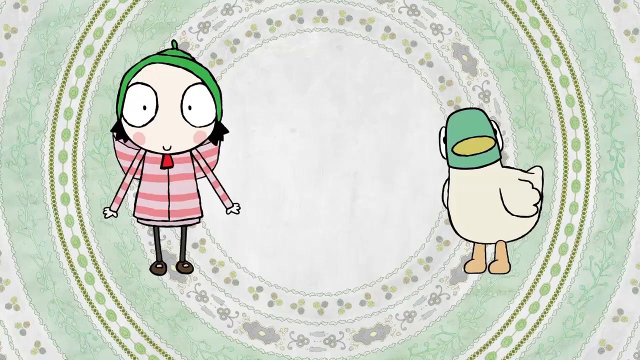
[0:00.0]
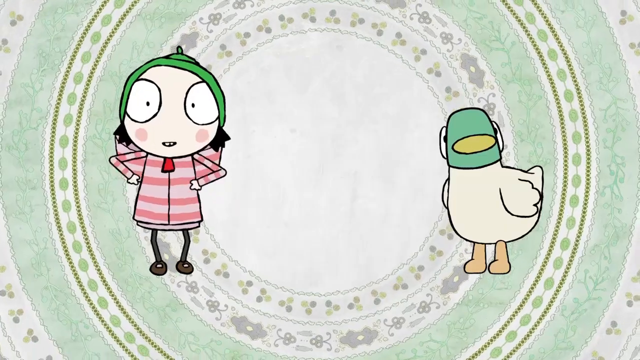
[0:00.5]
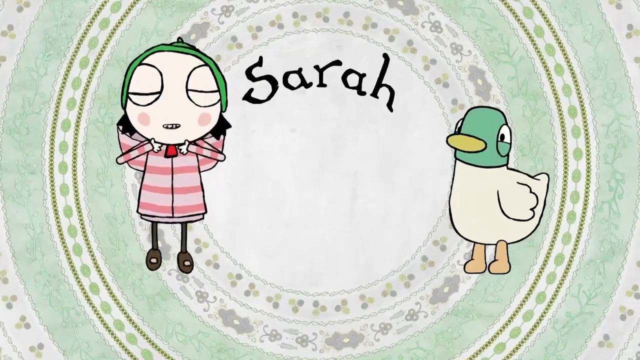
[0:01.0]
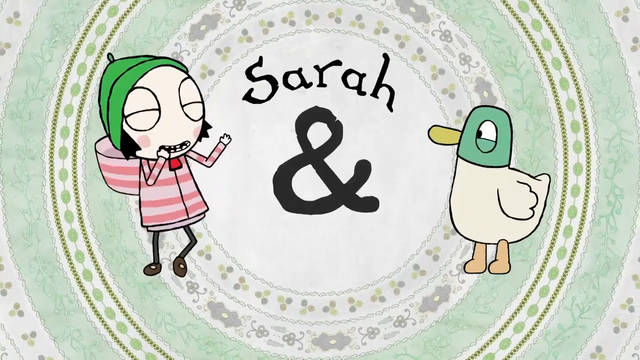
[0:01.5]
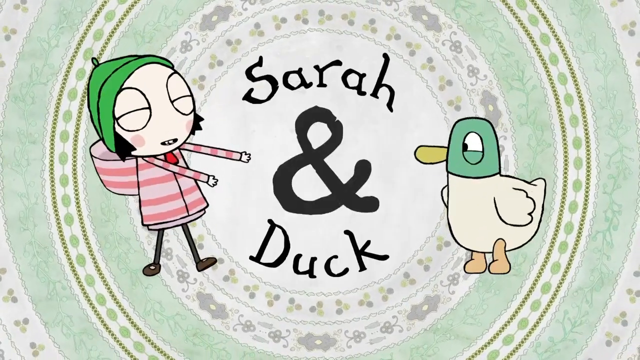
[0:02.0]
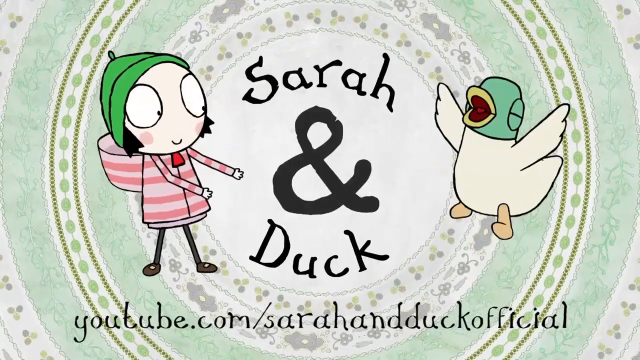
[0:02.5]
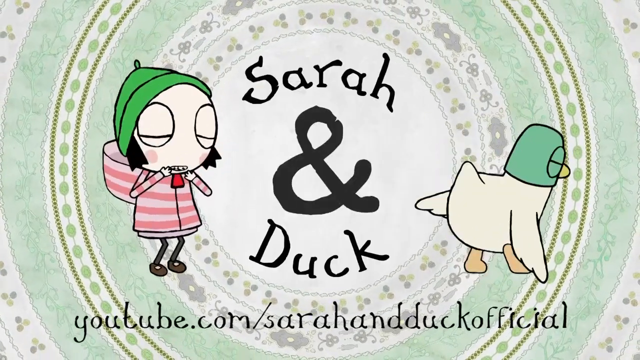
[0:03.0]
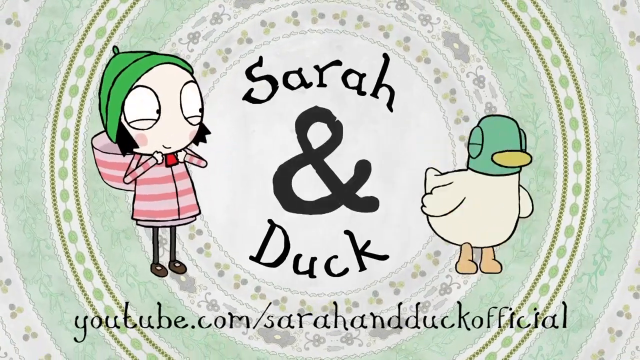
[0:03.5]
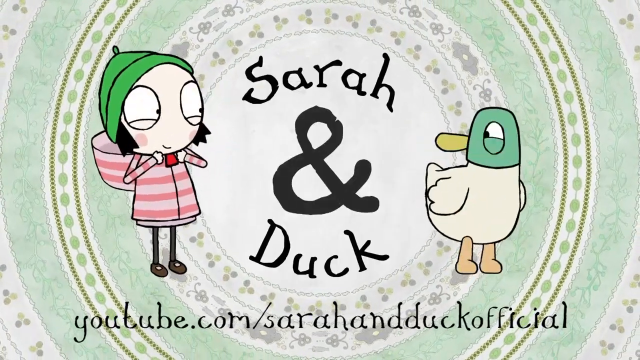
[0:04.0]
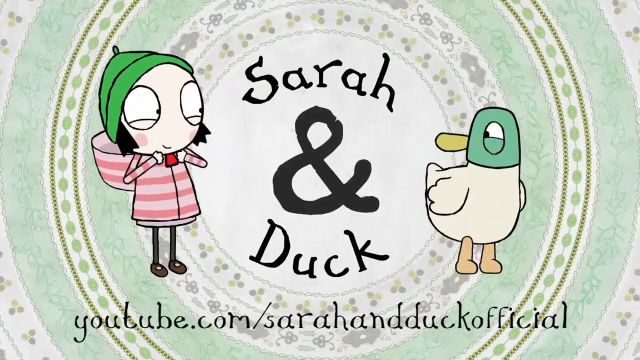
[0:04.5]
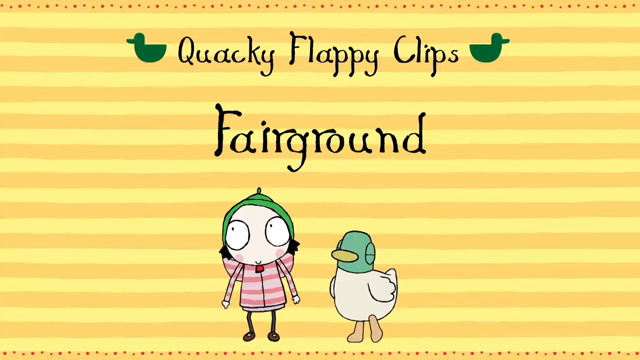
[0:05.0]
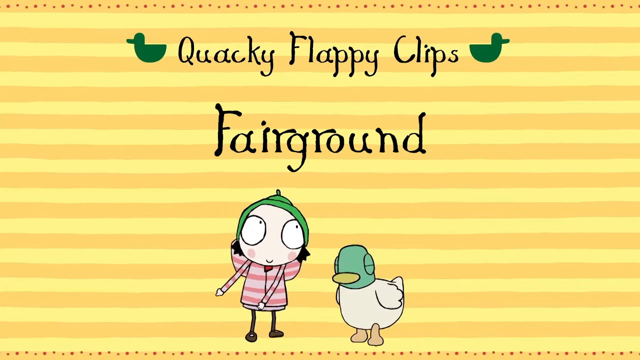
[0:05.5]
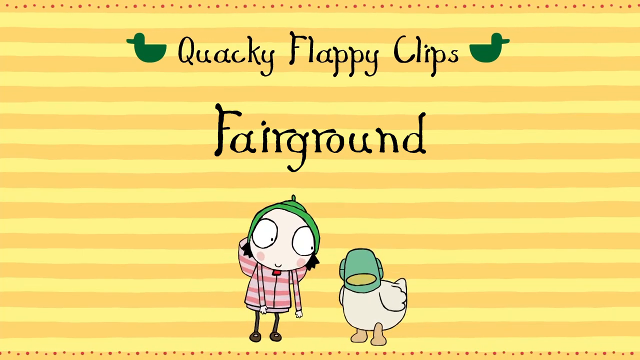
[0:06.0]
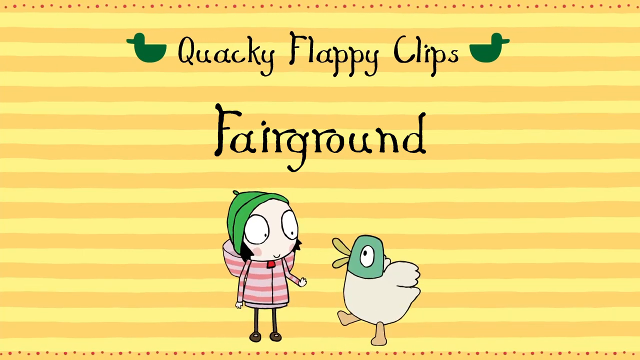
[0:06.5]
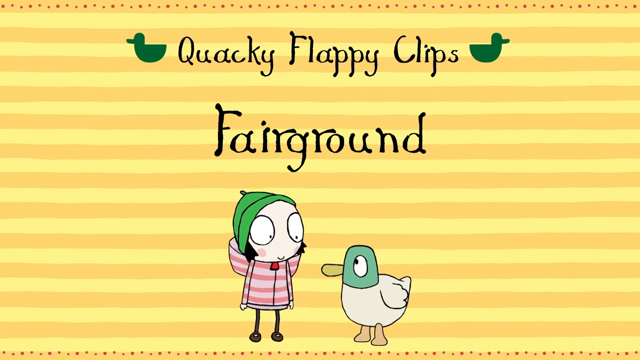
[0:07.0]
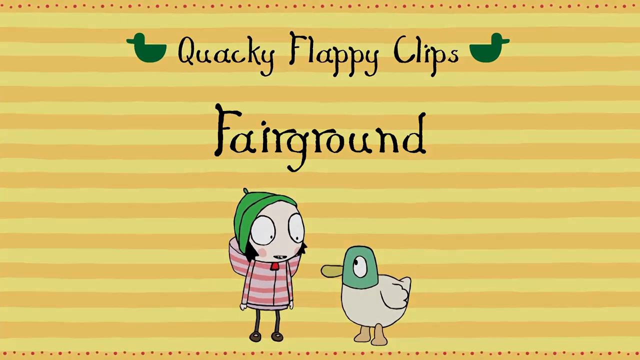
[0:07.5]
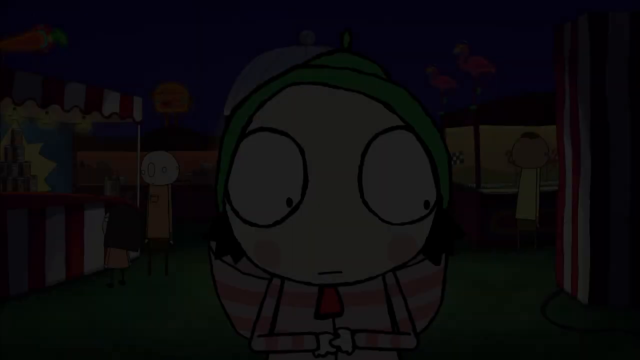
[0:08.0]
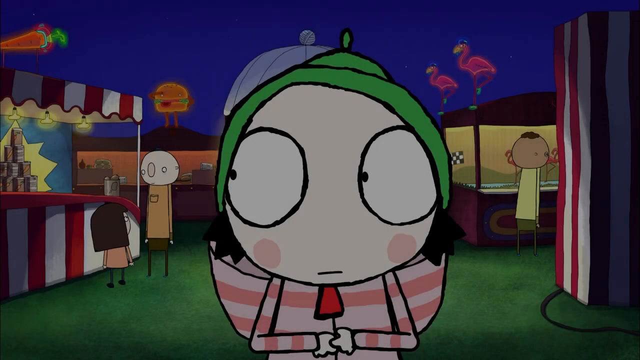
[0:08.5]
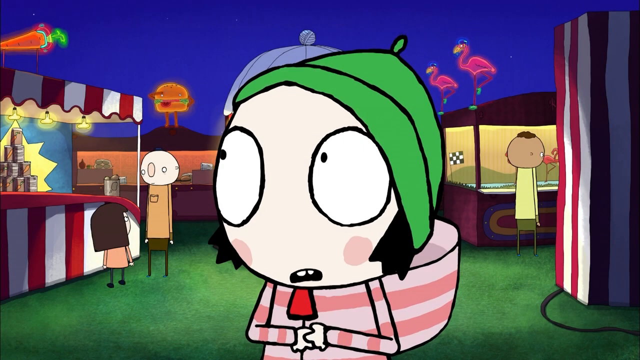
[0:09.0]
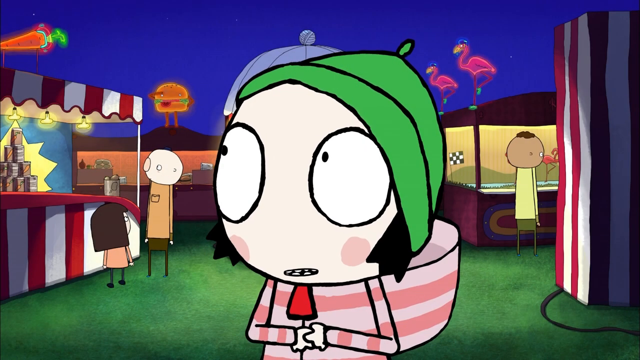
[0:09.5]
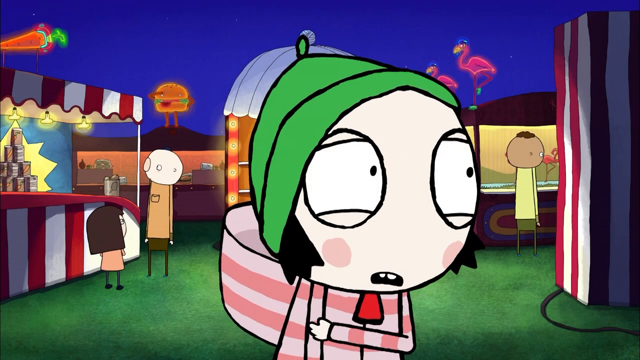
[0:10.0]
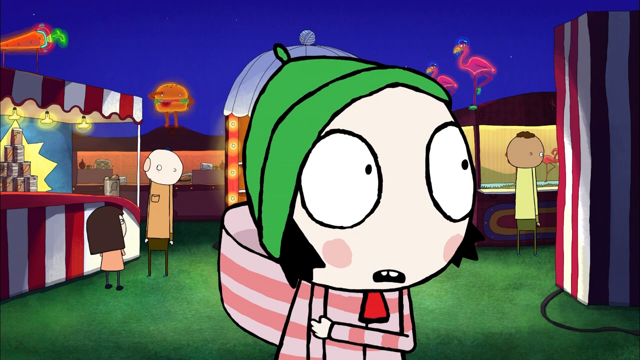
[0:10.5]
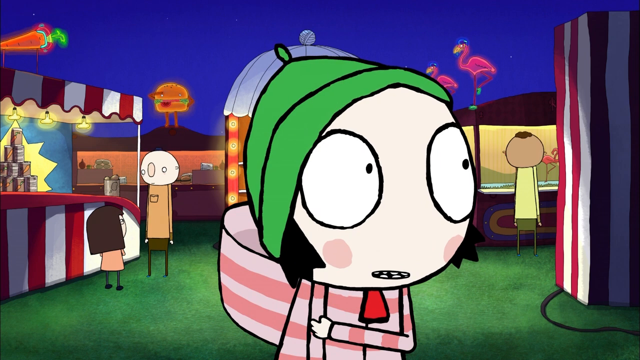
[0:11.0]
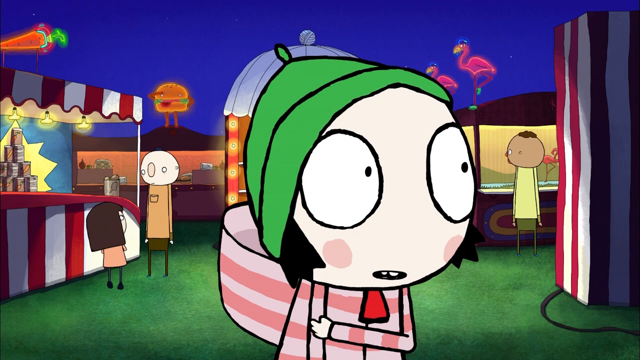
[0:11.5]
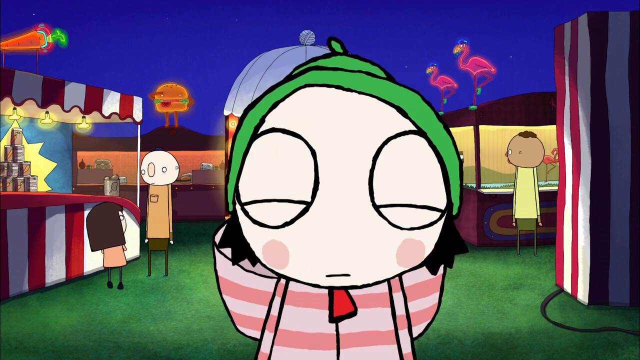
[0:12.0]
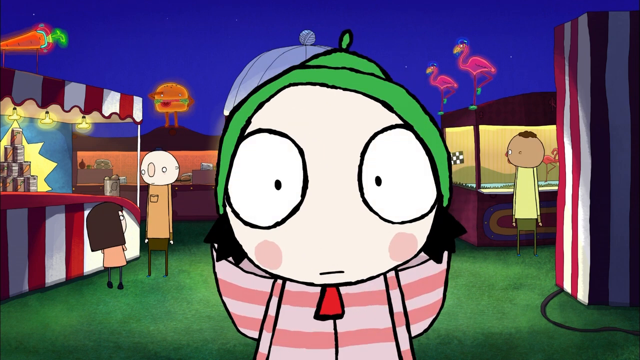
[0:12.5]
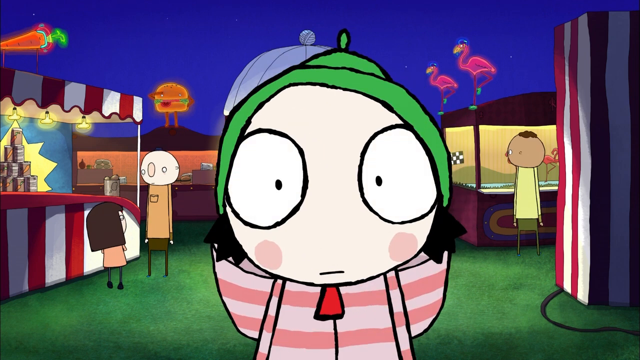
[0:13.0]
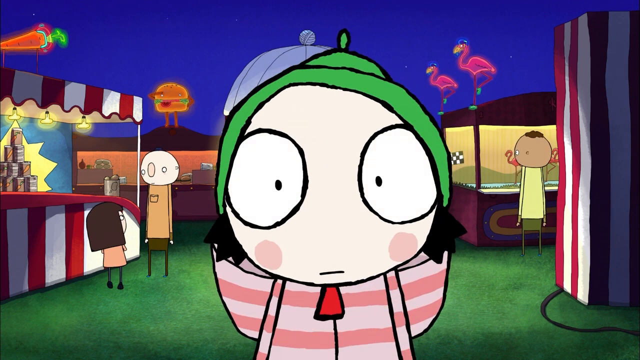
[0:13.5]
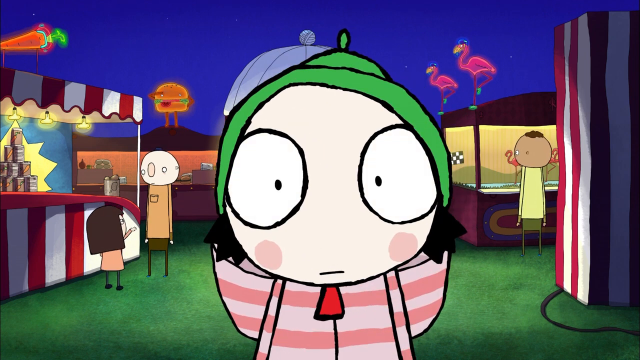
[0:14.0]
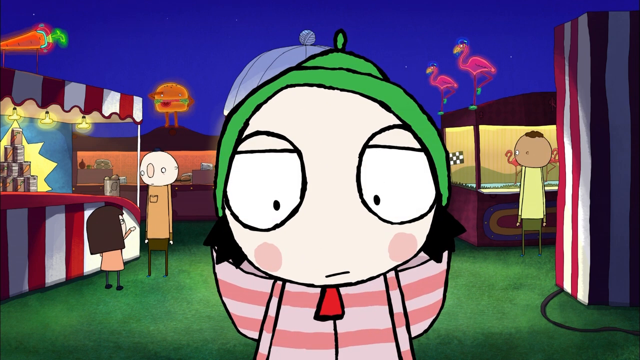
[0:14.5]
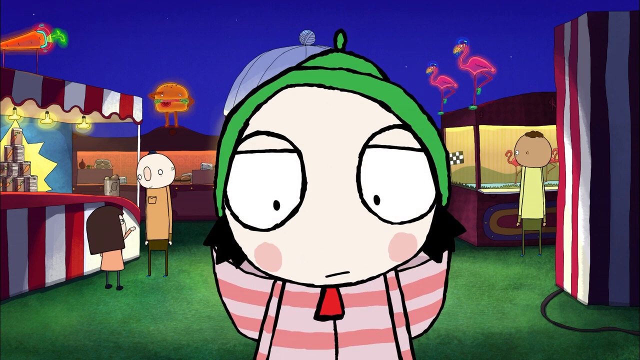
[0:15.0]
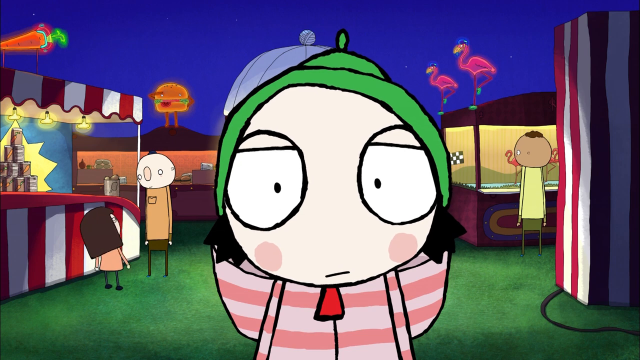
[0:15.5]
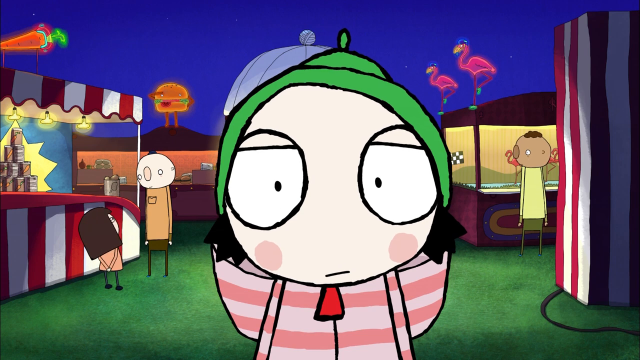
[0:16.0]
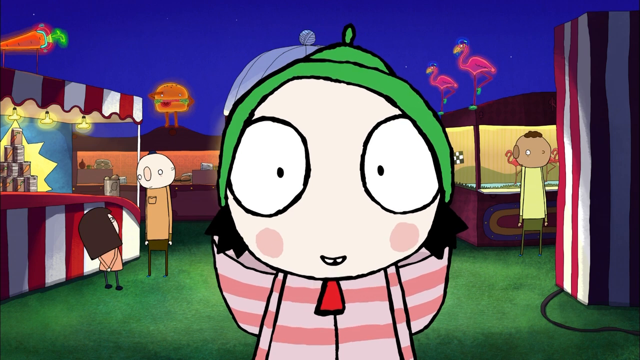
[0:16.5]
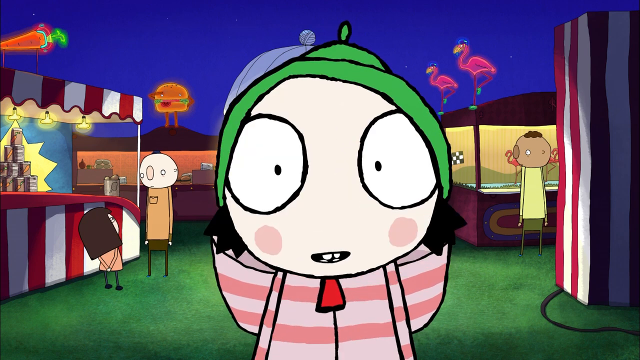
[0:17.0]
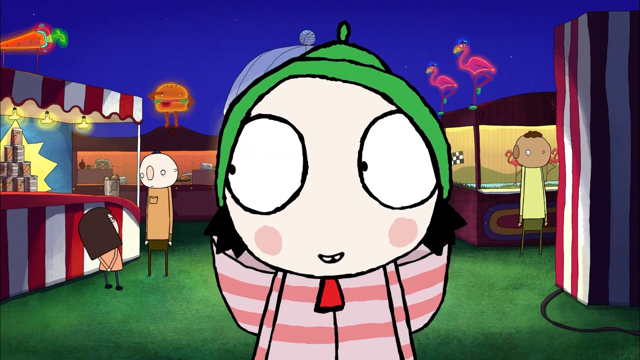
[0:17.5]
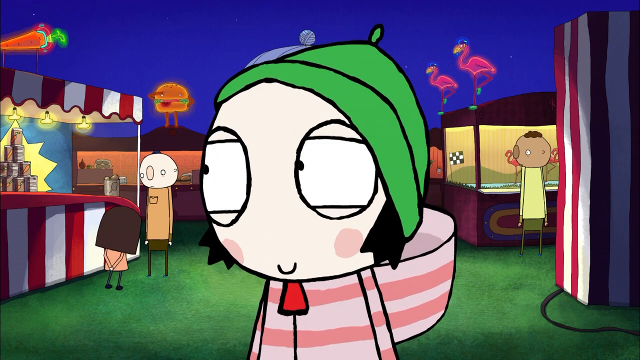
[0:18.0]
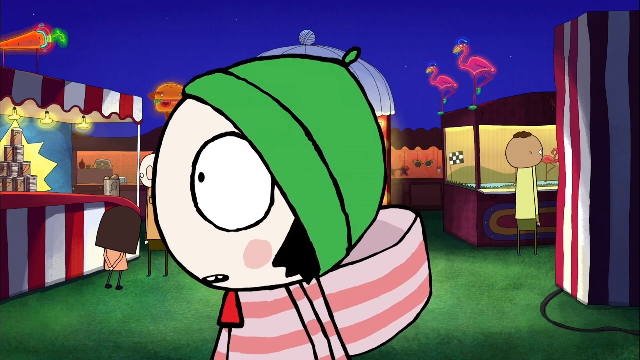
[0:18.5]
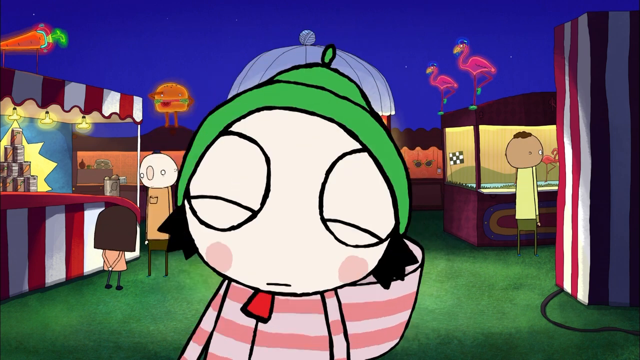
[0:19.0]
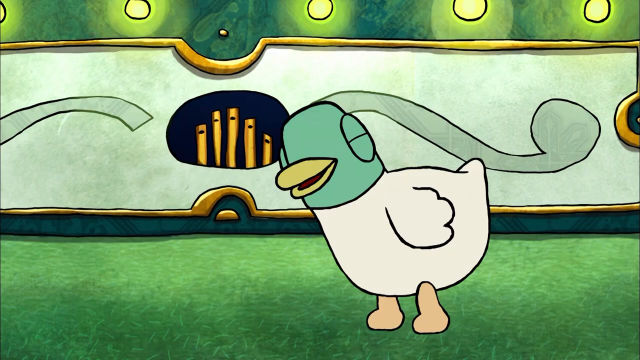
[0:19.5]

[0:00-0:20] A cartoon shows a little girl and a dog; the series is apparently titled Zara and Doug. Zara is a little girl wearing a red hoodie and a green beanie, with big eyes, and she has a red and white blazer. She seems to be friends with the dog. There seems to be a website called Zara and Doug official, and there is a fairground with text atop it that reads "Cranky Flippy Clips". Zara and Doug seems to be a cartoon series. Zara seems worried because she cannot see her friend.